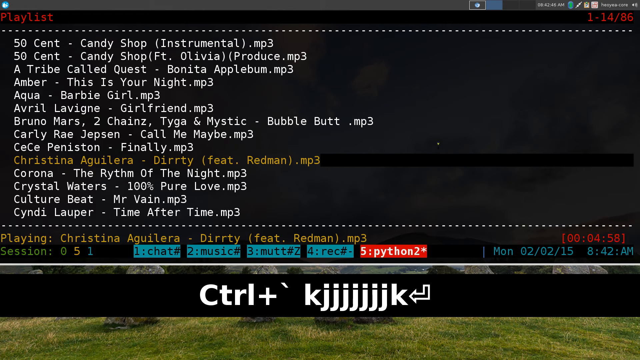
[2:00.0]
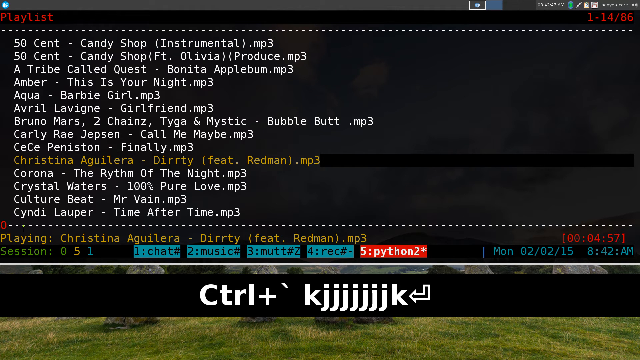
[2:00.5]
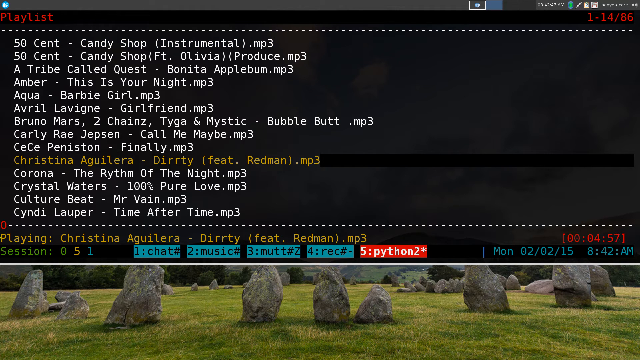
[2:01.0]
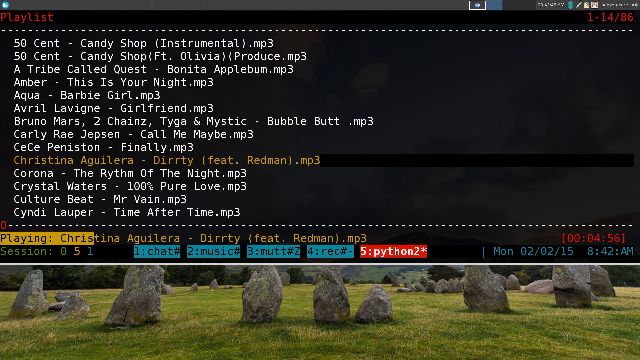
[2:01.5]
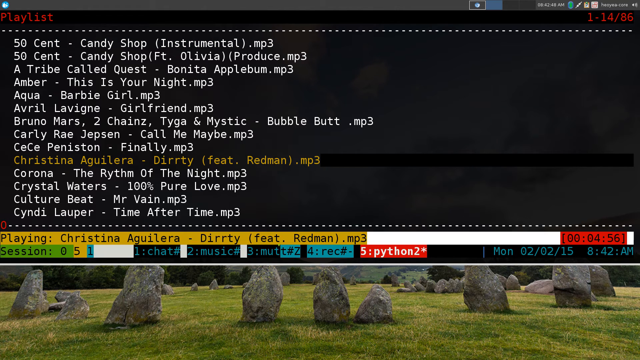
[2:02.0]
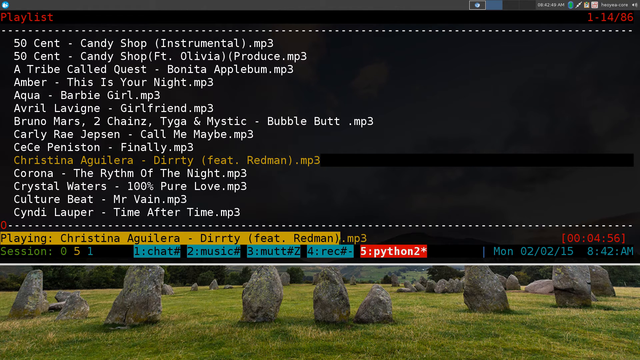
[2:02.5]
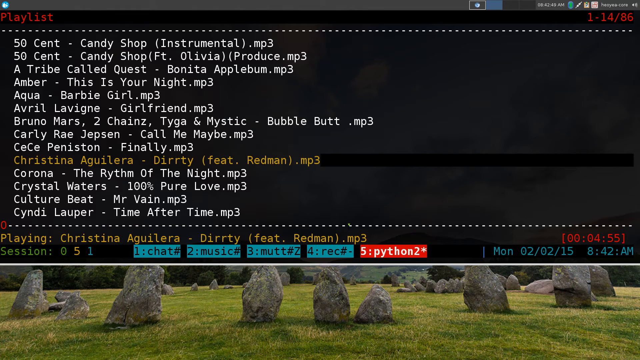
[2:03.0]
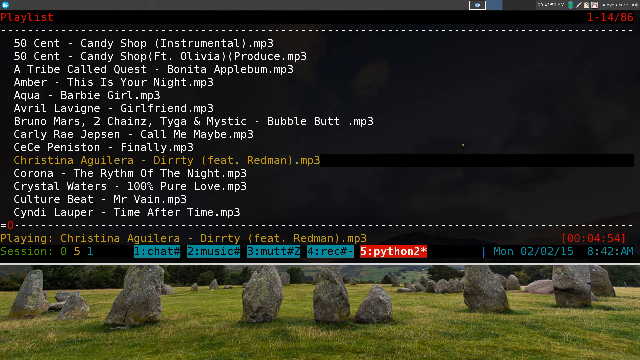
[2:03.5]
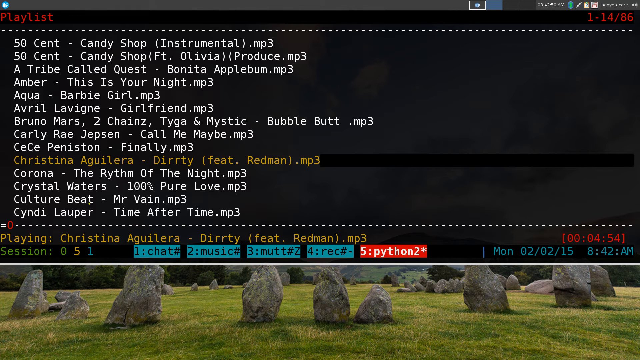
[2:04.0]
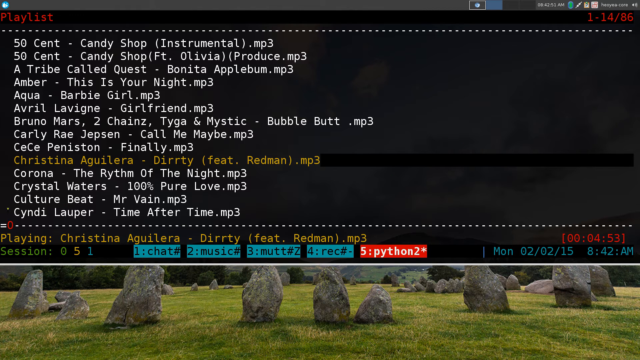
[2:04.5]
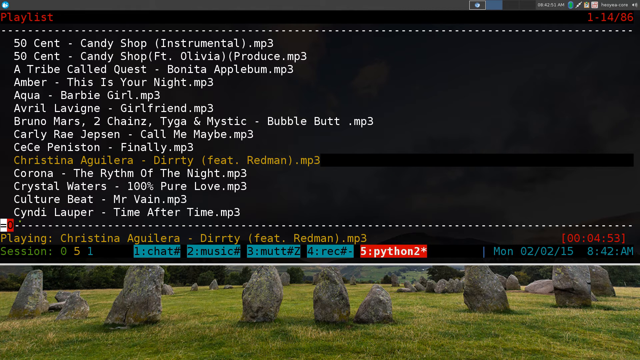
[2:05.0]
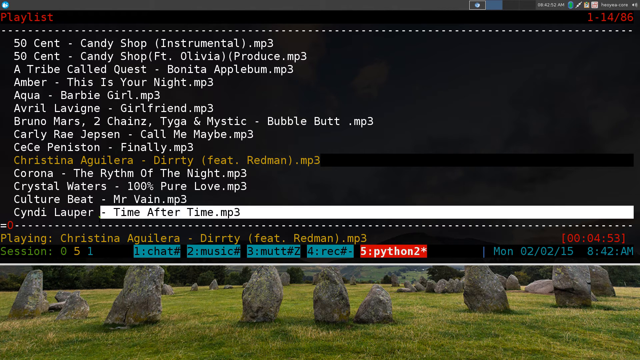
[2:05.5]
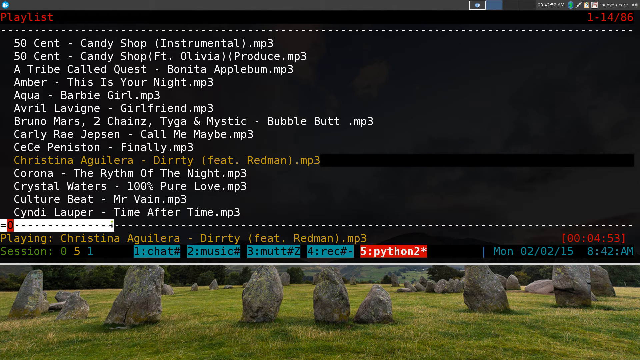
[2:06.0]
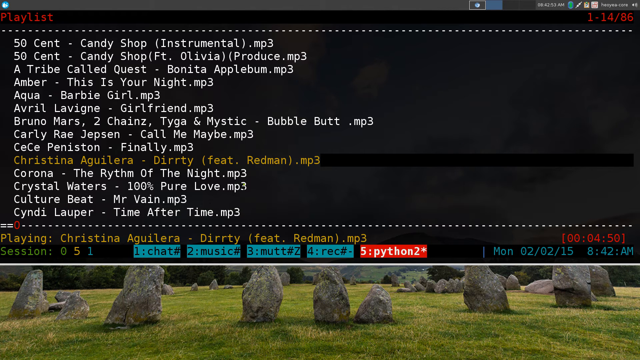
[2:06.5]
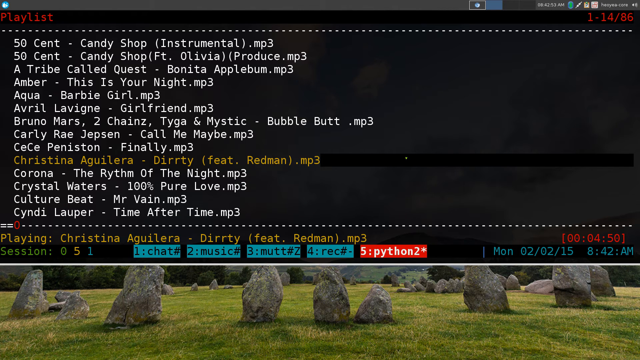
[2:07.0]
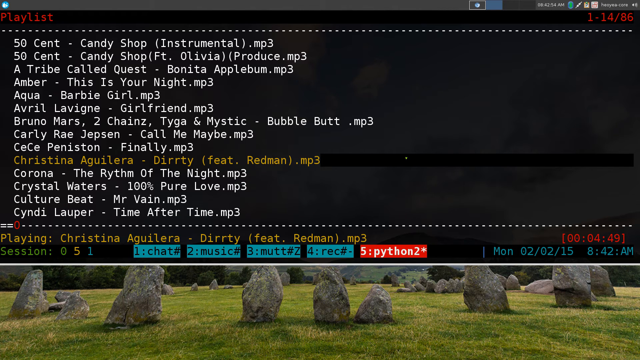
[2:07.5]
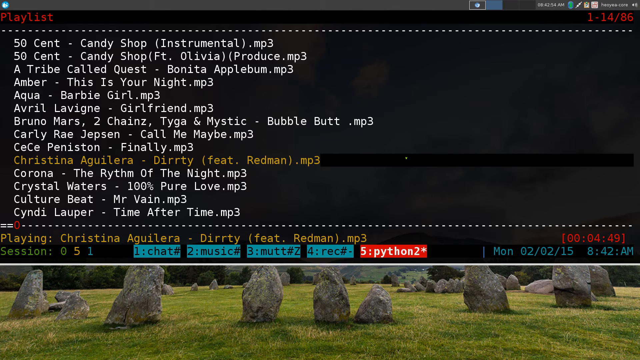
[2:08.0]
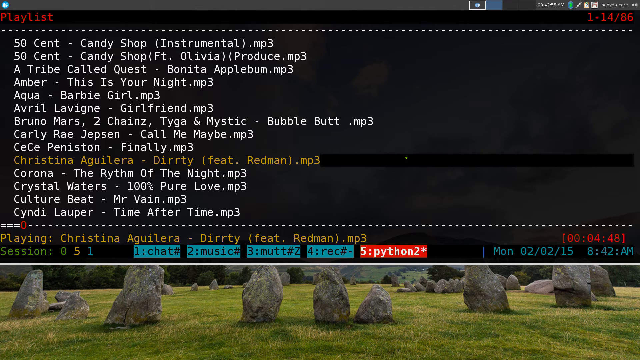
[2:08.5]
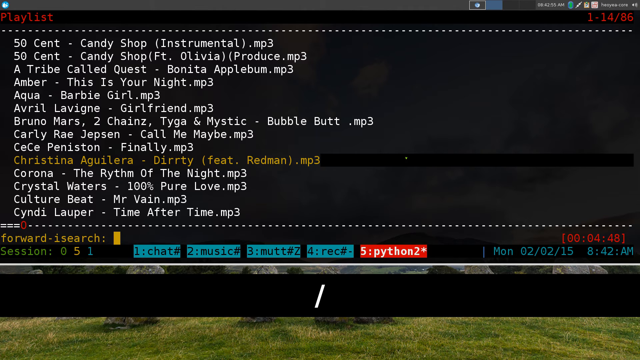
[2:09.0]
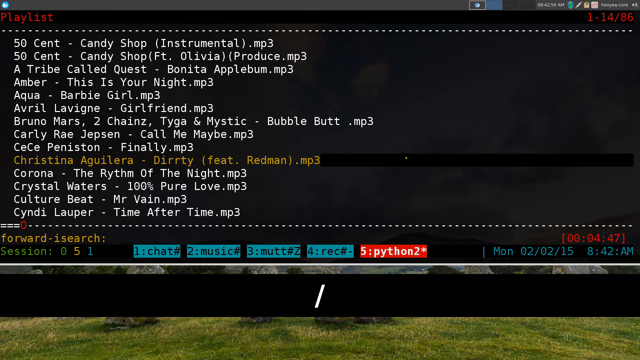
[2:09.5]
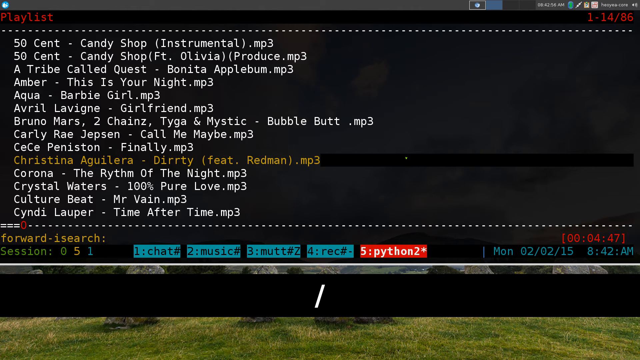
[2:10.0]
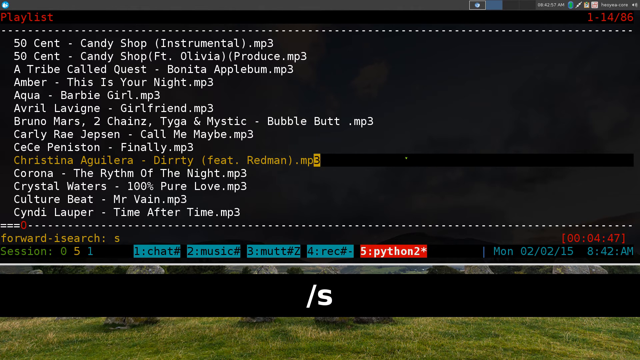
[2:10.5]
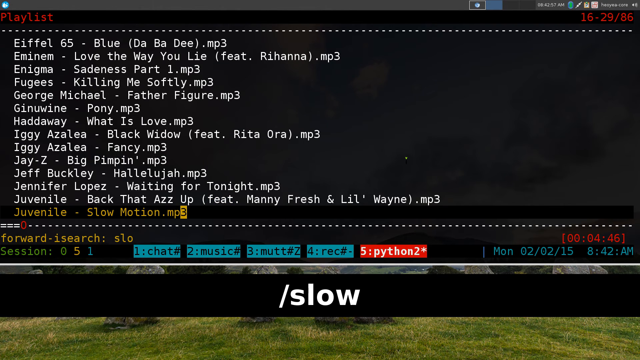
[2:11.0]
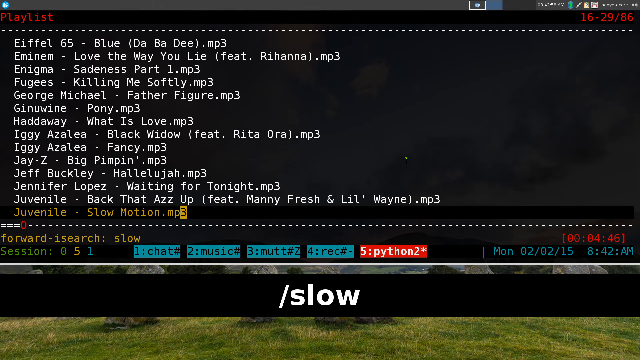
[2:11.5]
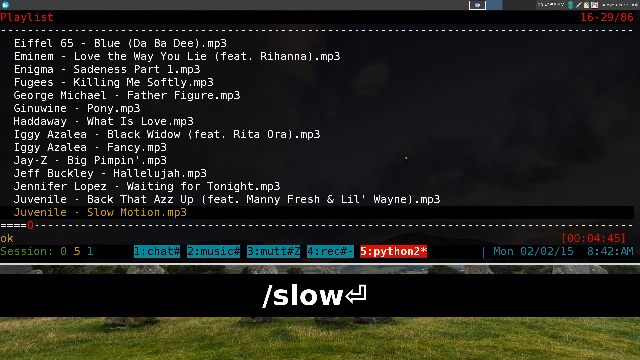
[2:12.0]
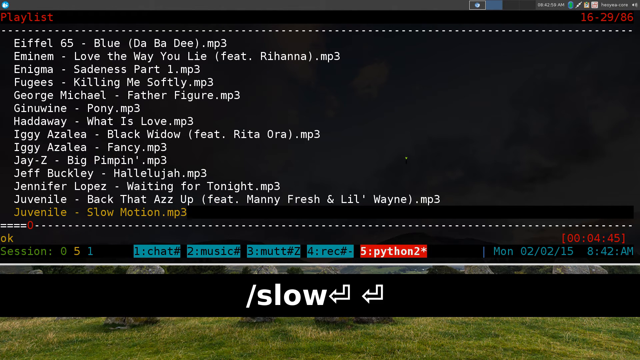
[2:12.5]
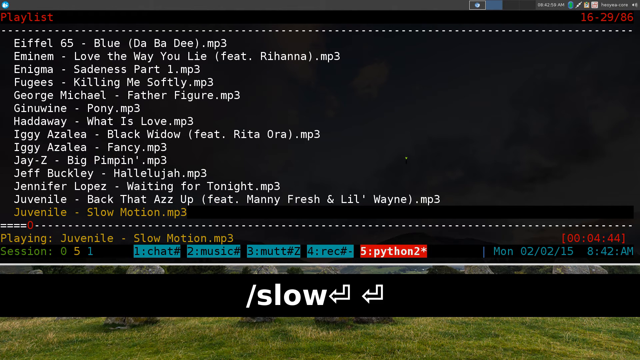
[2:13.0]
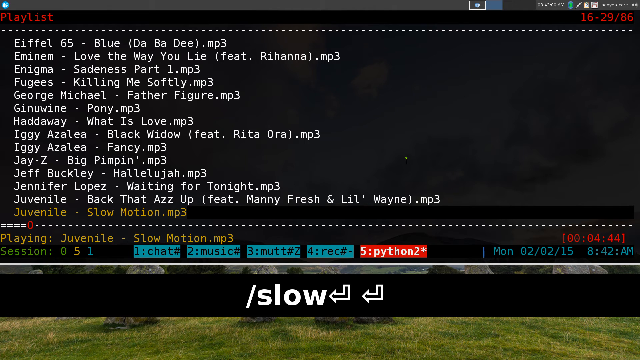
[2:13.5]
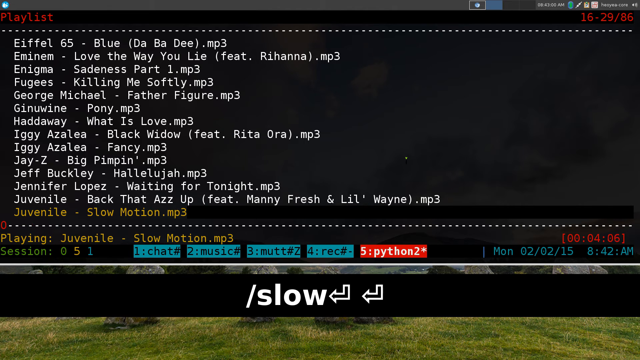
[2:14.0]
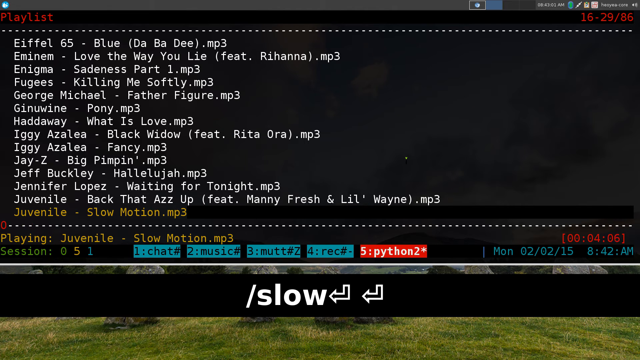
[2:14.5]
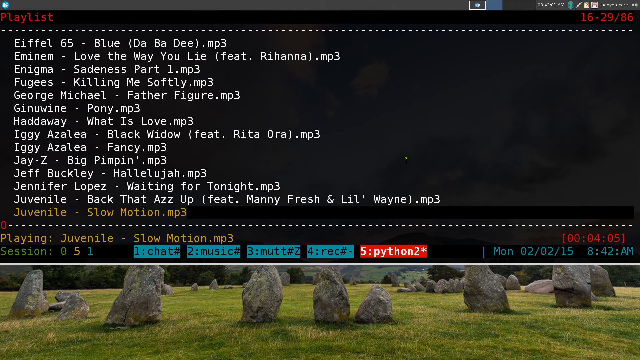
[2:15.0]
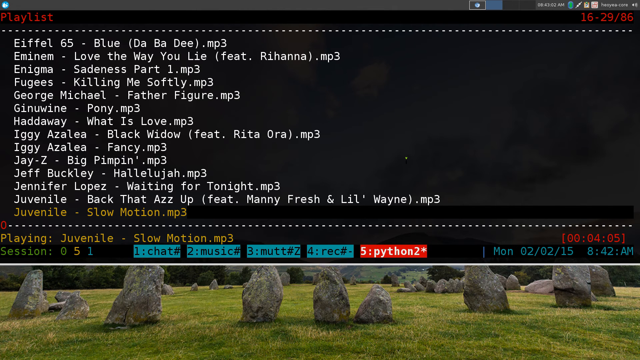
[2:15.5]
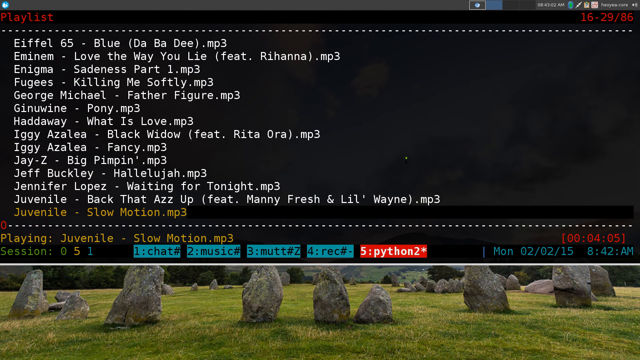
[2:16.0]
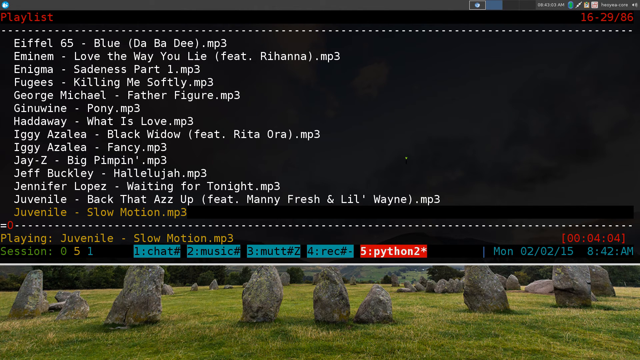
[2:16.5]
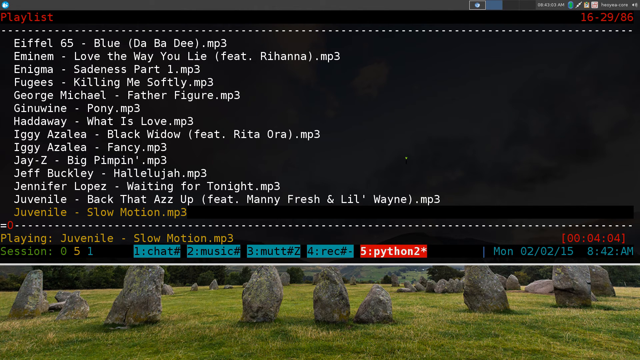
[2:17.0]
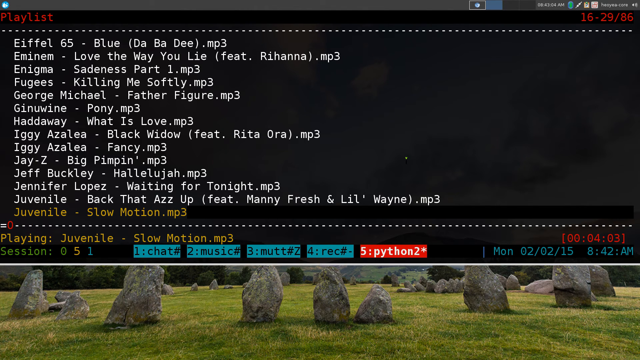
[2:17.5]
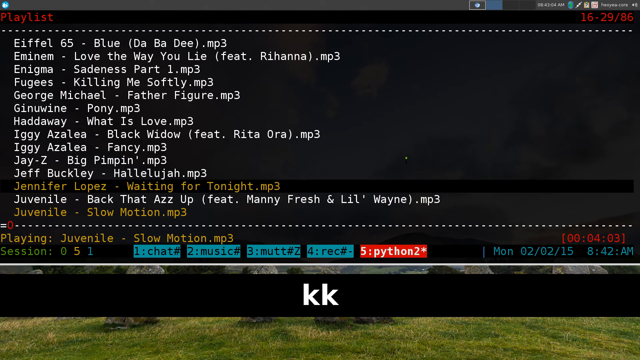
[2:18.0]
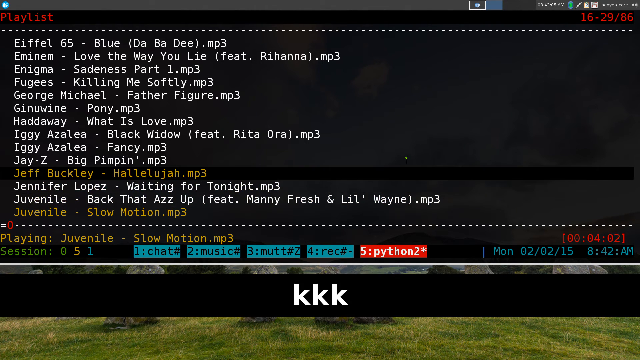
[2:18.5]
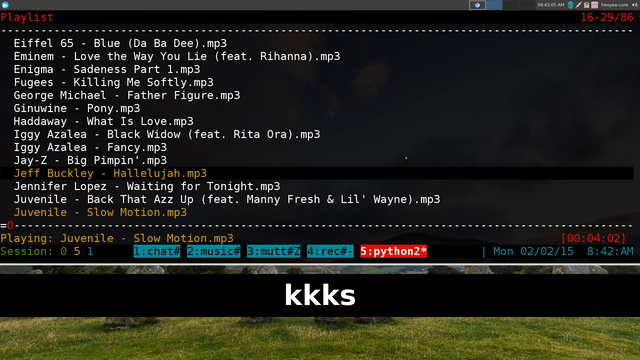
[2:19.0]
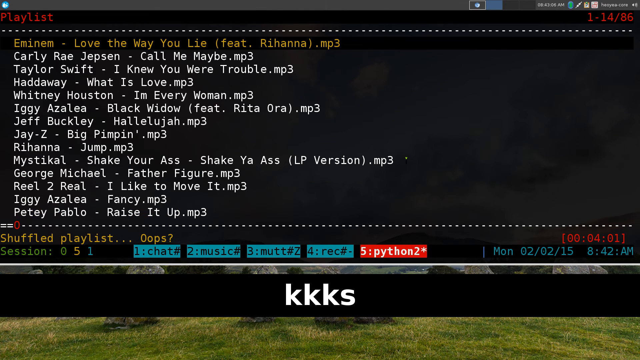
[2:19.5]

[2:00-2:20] Christina Aguilera Dirty featuring Redman.mp3 is playing. The user highlights the area of the terminal showing that the song is playing, with the highlight in dark yellow. The user also highlights the Sessions area right below it, accidentally highlighting that entire section. As the song plays, the user highlights the dashed line showing how much of the song remains; the highlight is yellow except for the 0, which is highlighted in red. The user then presses the forward slash, types slow, and presses enter twice, which starts playing Juvenile Slow Motion.mp3, a song four minutes and five seconds long. The user presses the K key three times, moving the list up by three, then presses S, which moves the list to a different area.